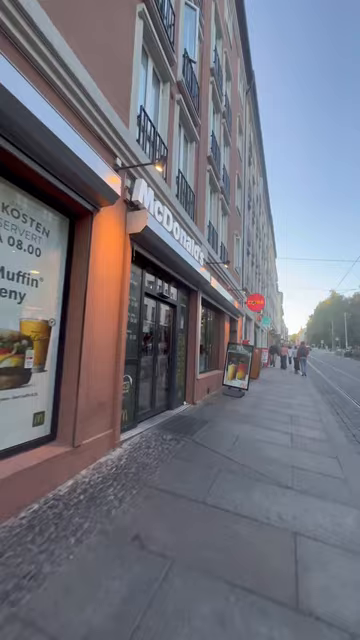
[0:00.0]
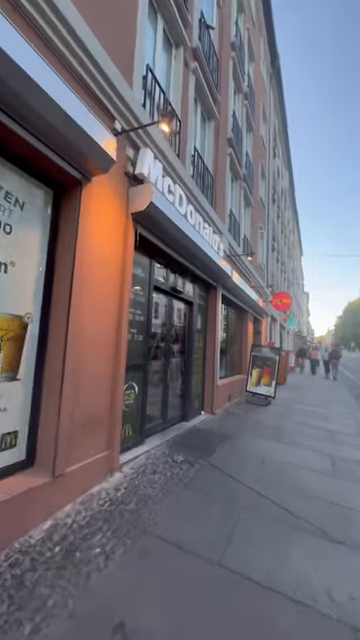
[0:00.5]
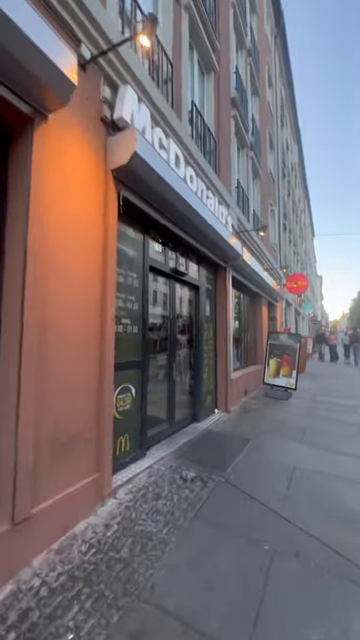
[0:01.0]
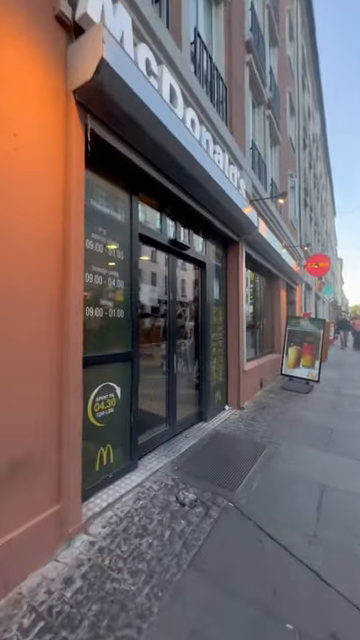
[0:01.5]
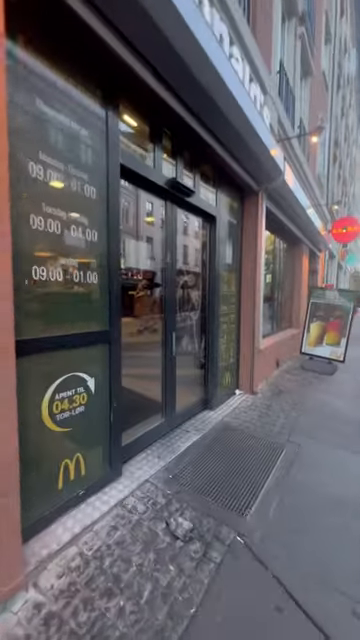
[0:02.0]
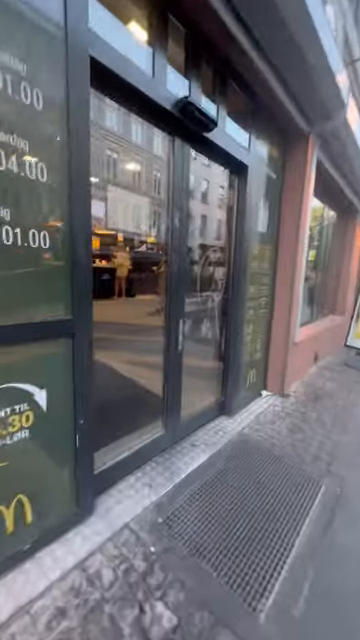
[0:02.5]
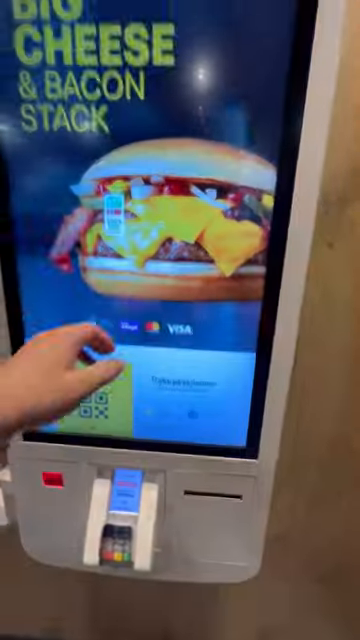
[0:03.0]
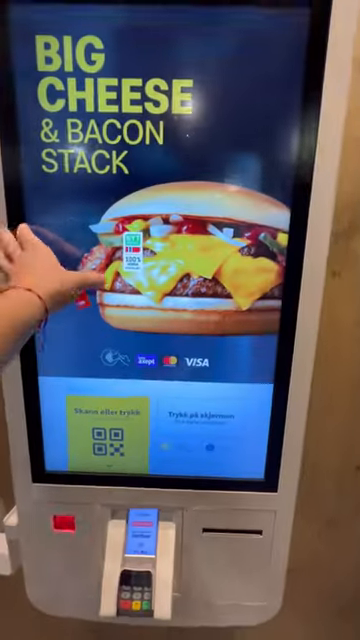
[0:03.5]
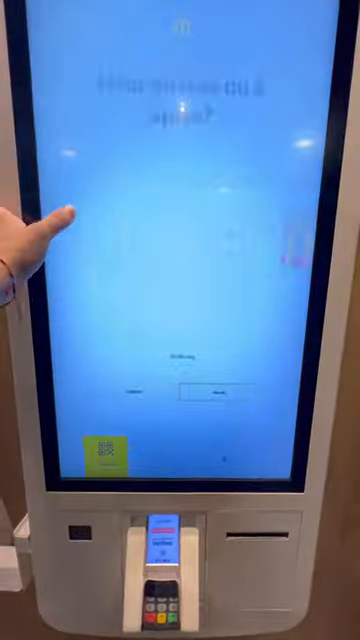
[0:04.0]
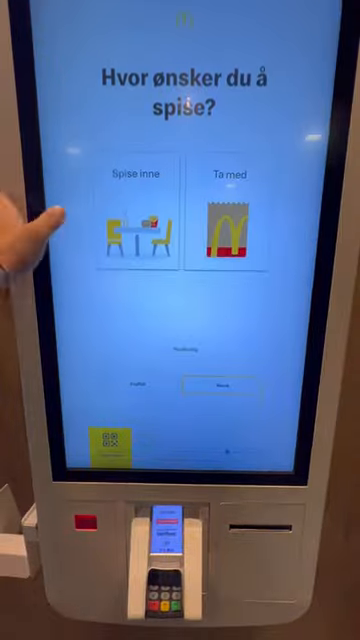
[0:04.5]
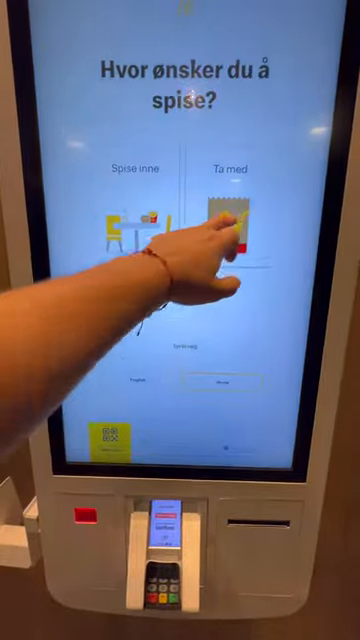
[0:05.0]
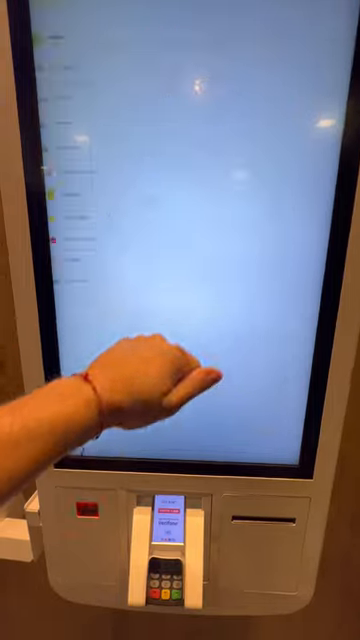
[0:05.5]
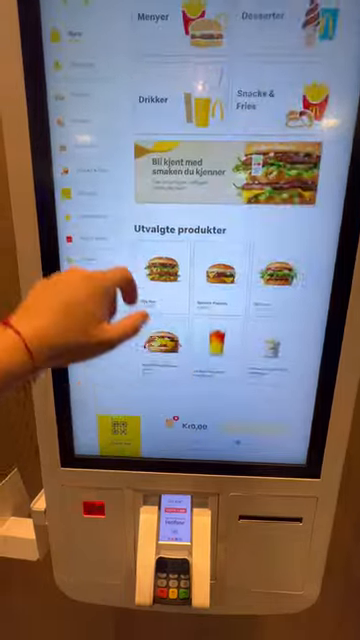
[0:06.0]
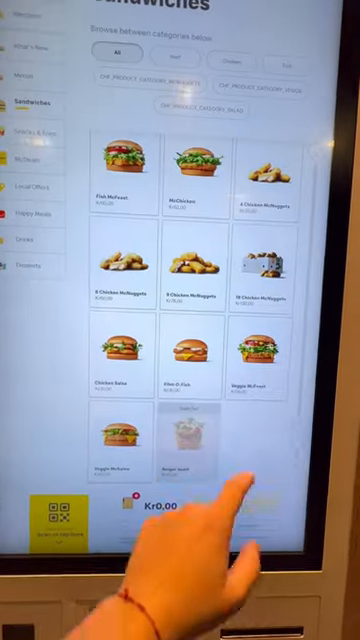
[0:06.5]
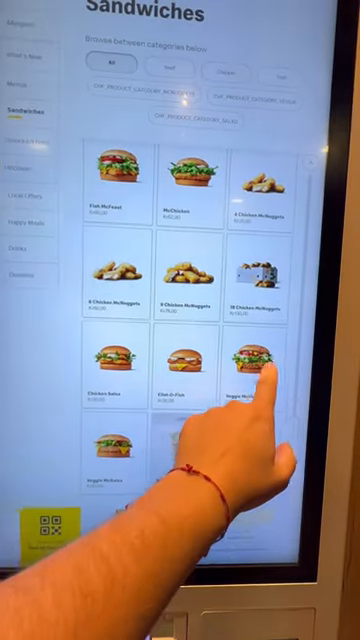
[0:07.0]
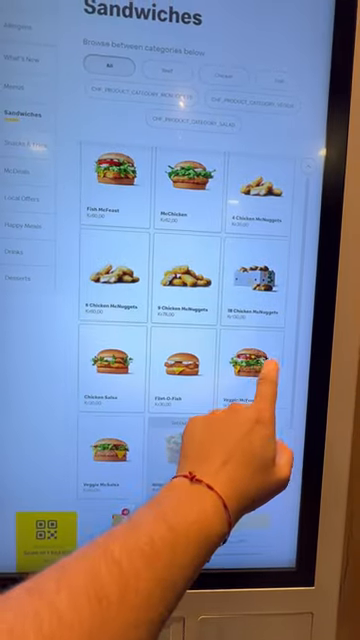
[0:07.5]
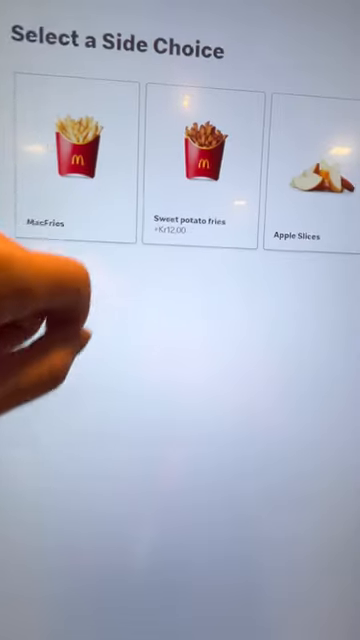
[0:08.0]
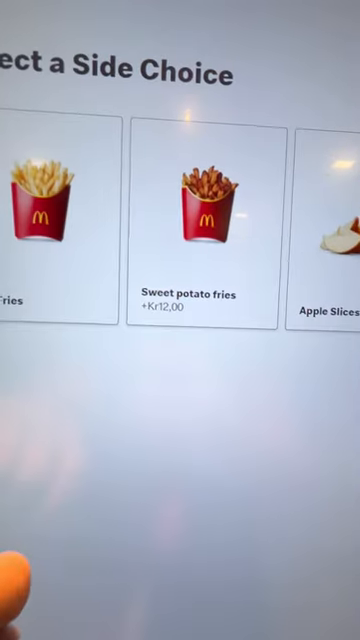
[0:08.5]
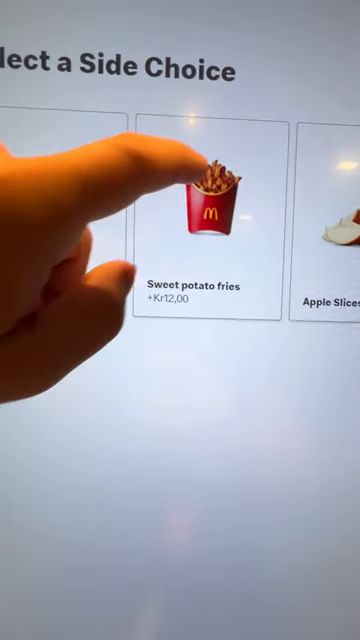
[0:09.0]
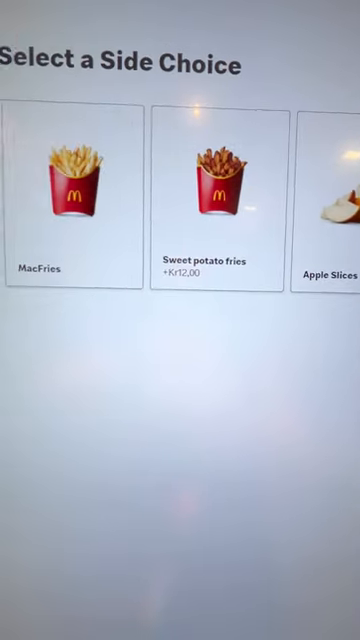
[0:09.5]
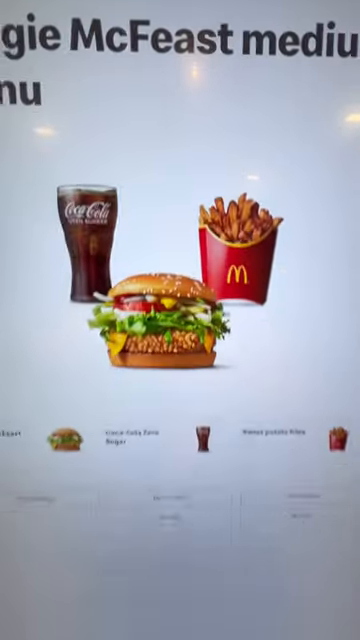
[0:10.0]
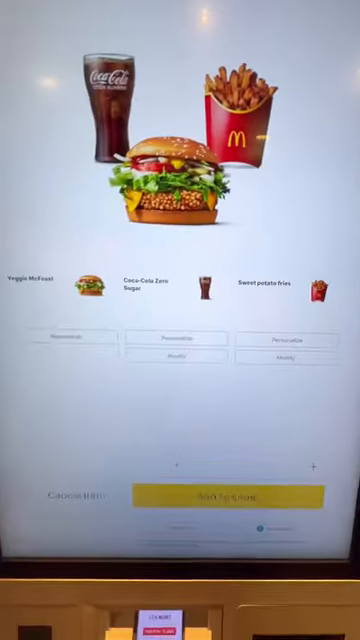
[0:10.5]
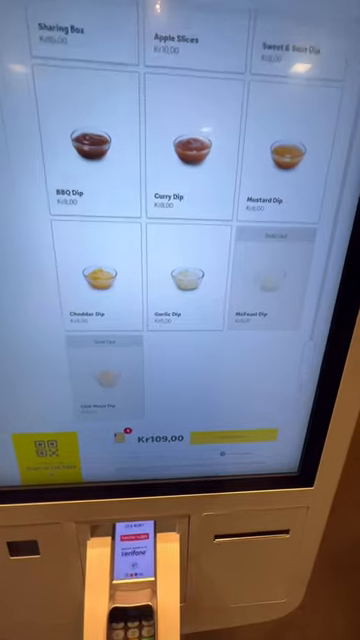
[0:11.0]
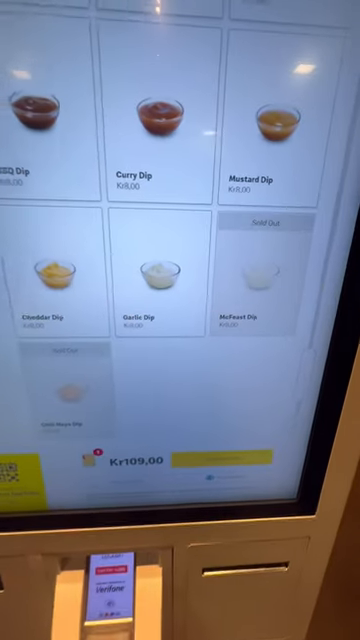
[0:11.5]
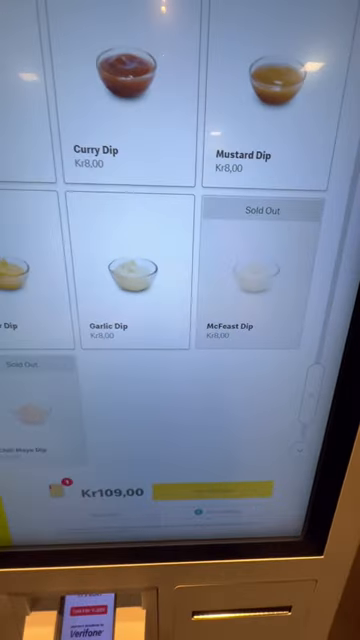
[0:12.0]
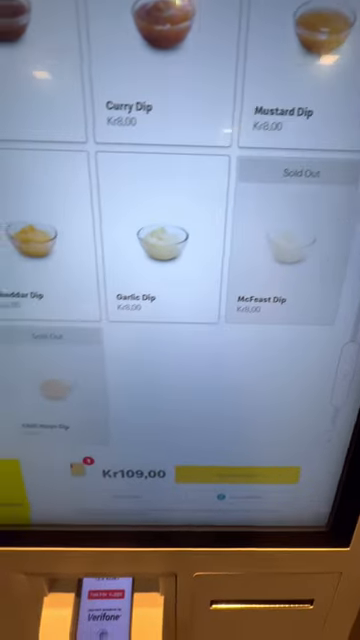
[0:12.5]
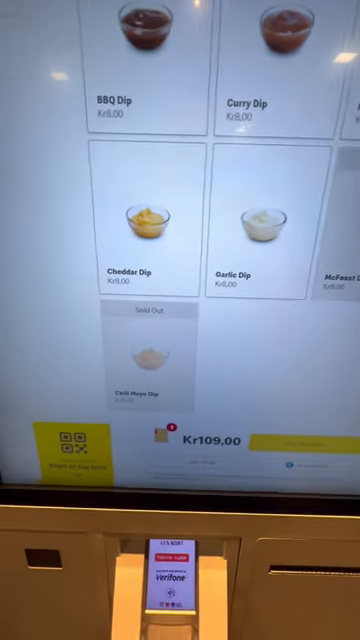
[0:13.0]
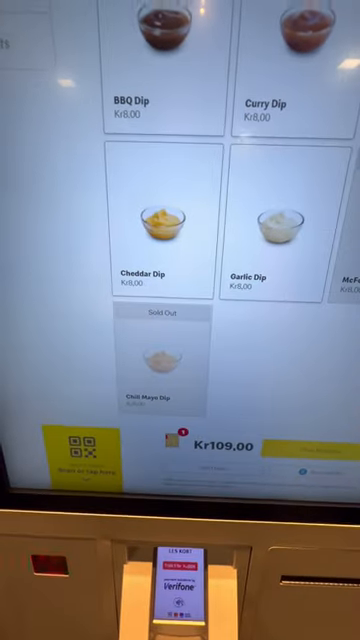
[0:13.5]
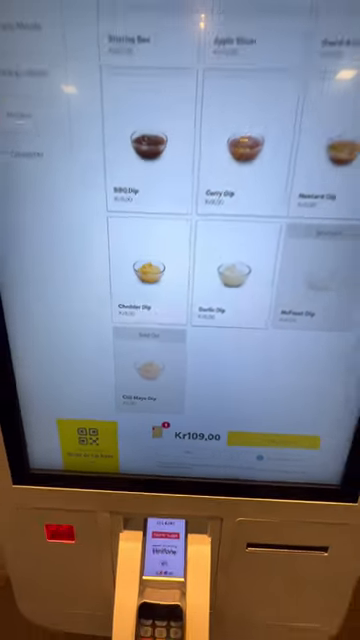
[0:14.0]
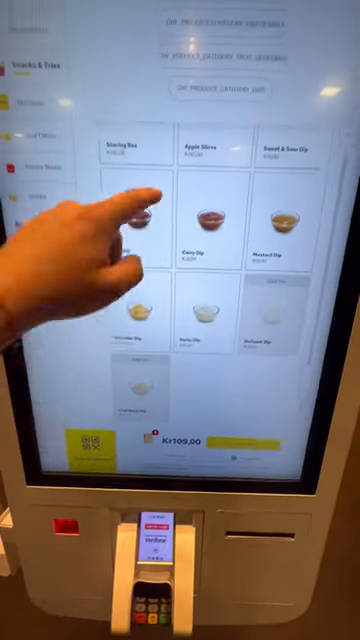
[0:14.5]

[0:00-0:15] The camera, held in what looks like portrait mode, moves down a sidewalk path toward a McDonald's restaurant. The storefront is next to other buildings, and the camera moves toward its glass doors. The scene then turns to a self-order kiosk inside the McDonald's. A hand touches the screen and options appear in a different language. The hand picks an option showing a bag; the other option shows a table, so the bag apparently means takeout. The screen then turns to a list of items such as burgers and chicken nuggets, and one of the burgers seems to be picked. Next the fries appear and one of the fries is picked. A meal of fries, a drink and the burger is then shown, followed by a list of different sauces, which is kind of scrolled up.